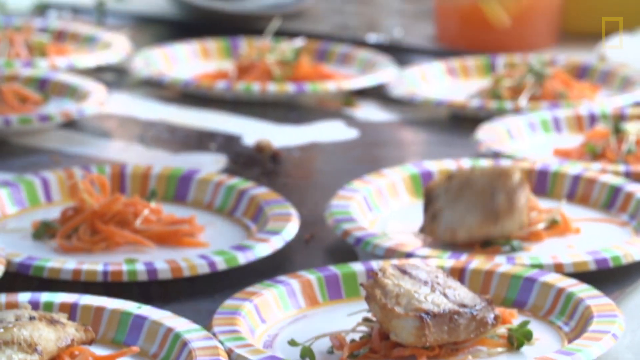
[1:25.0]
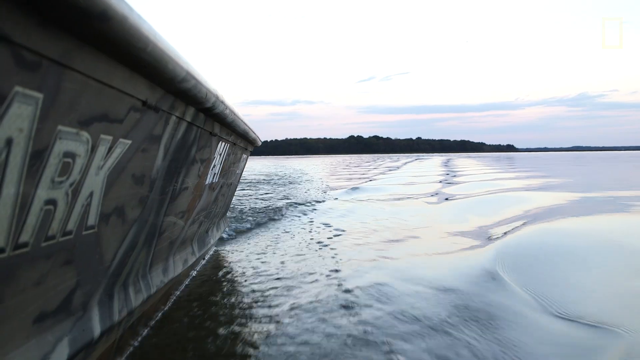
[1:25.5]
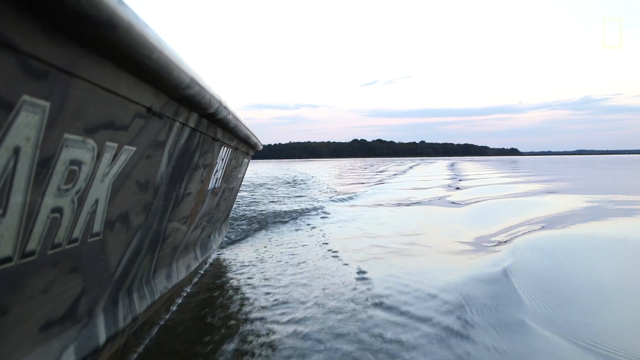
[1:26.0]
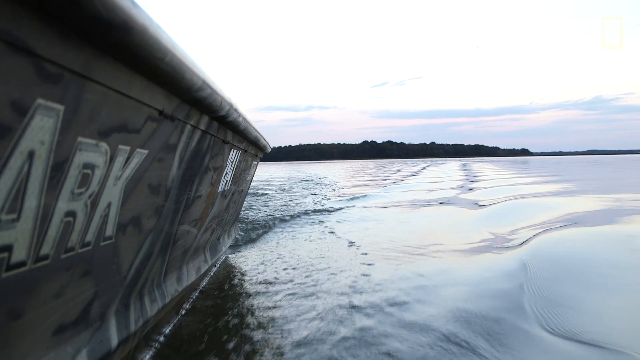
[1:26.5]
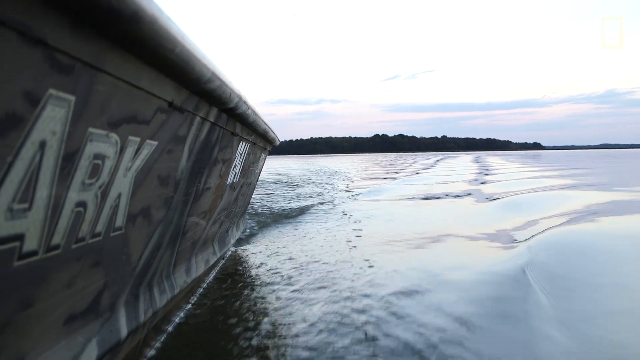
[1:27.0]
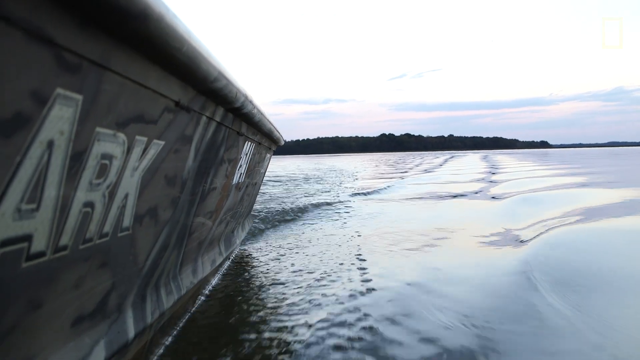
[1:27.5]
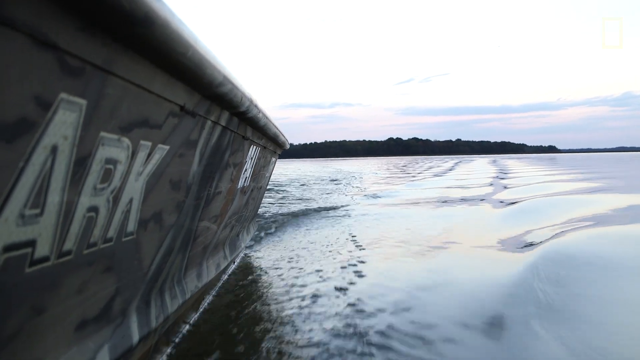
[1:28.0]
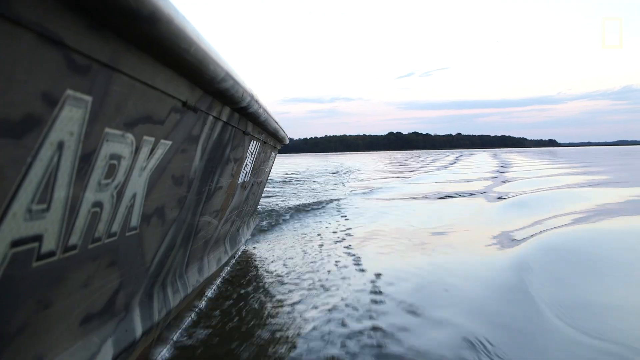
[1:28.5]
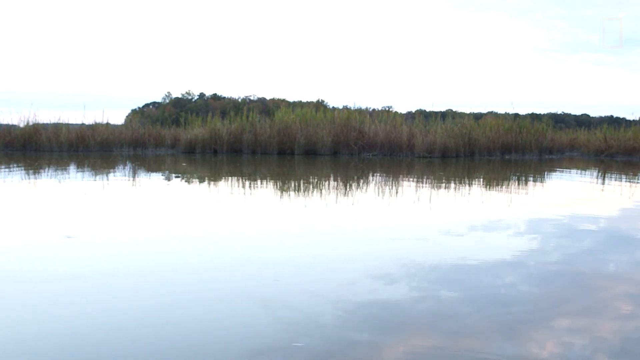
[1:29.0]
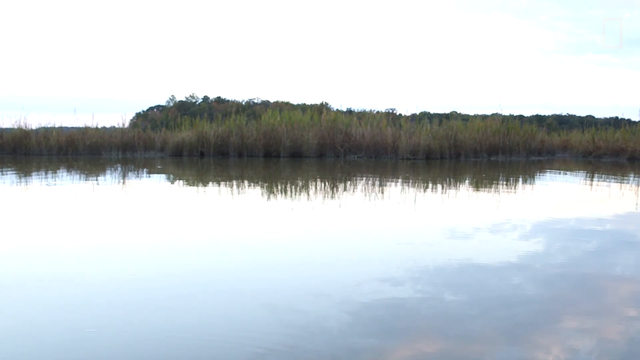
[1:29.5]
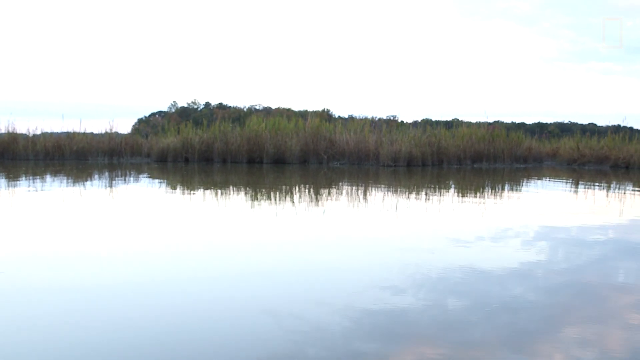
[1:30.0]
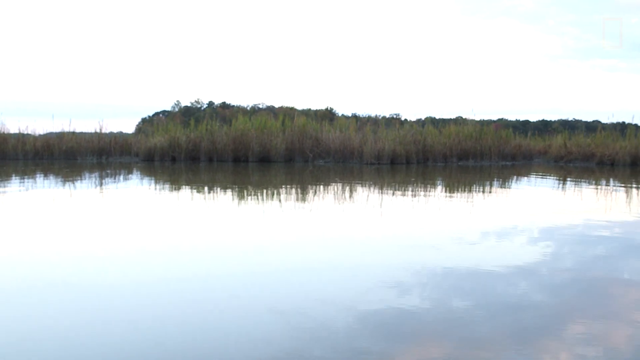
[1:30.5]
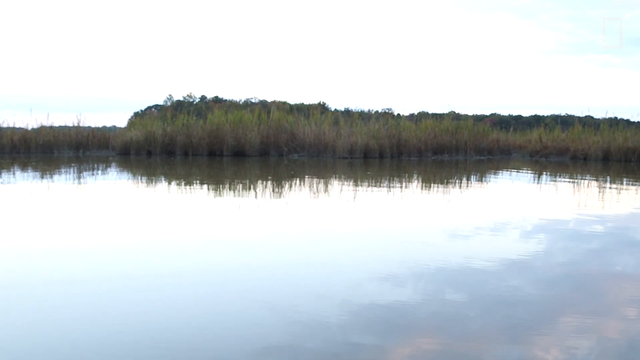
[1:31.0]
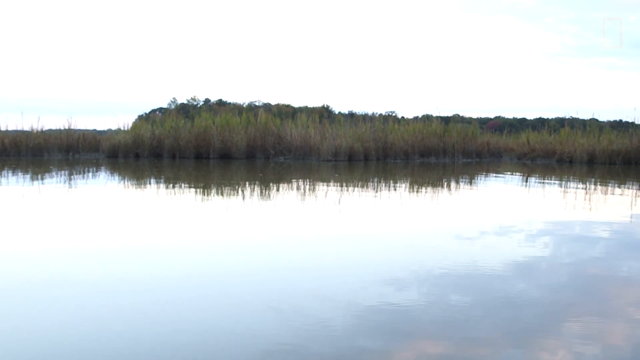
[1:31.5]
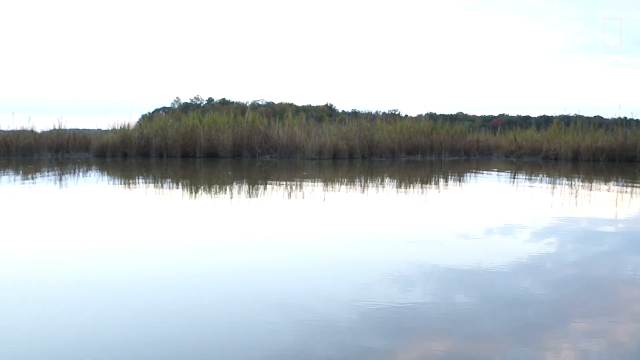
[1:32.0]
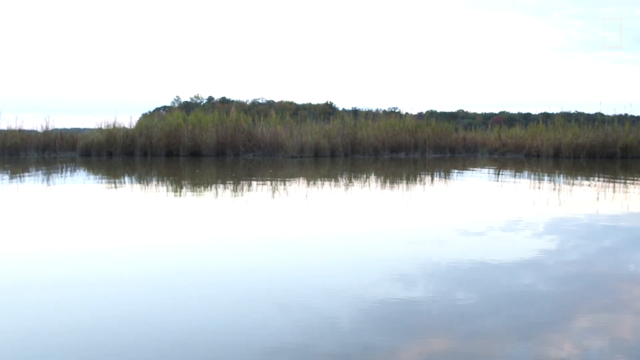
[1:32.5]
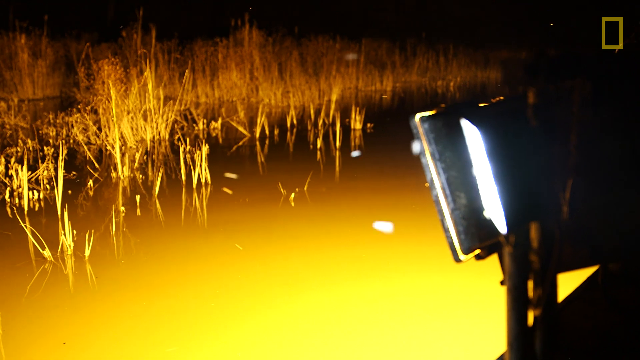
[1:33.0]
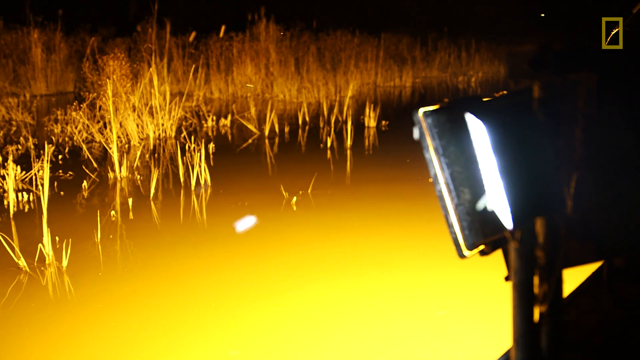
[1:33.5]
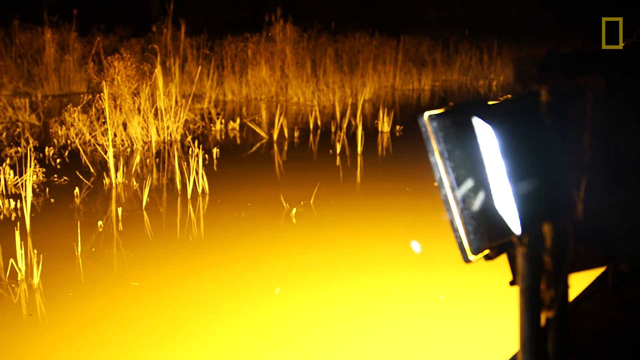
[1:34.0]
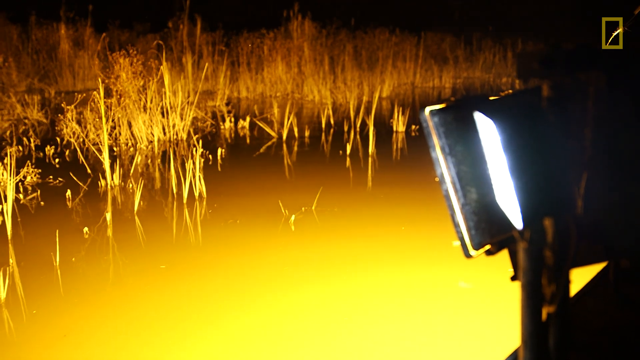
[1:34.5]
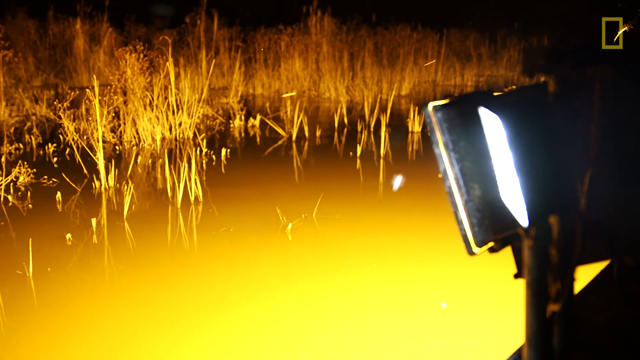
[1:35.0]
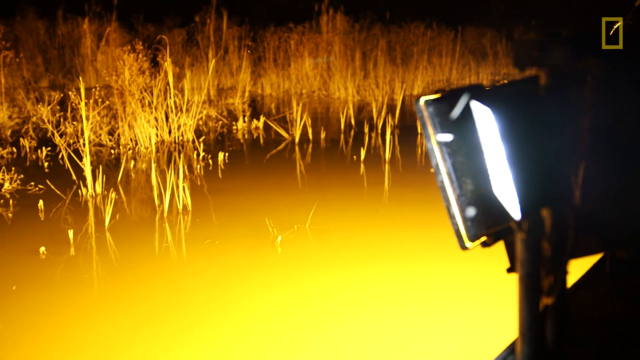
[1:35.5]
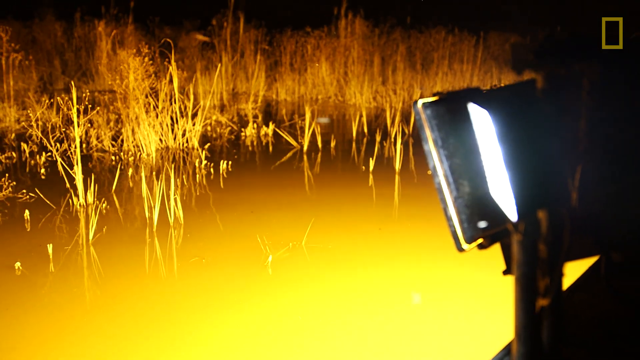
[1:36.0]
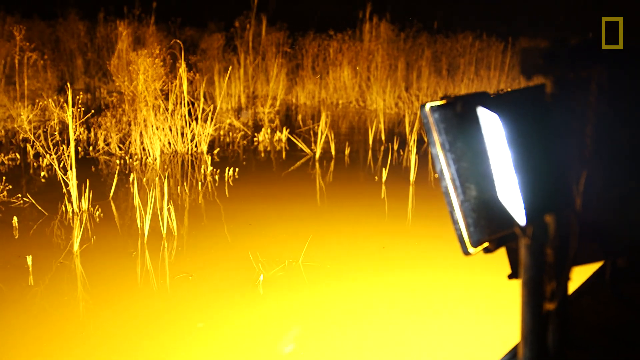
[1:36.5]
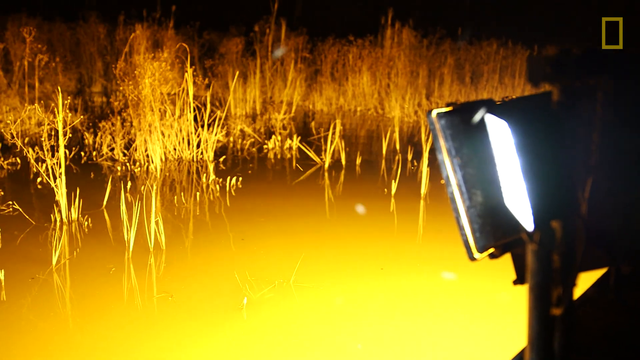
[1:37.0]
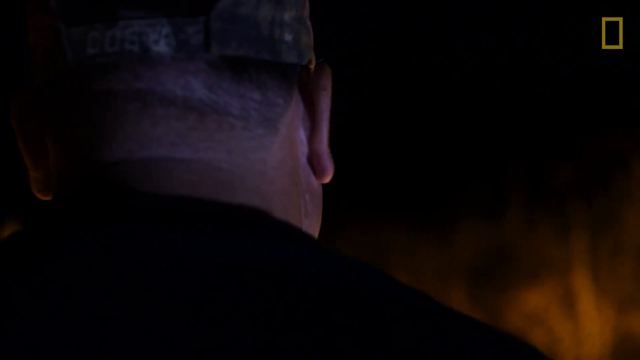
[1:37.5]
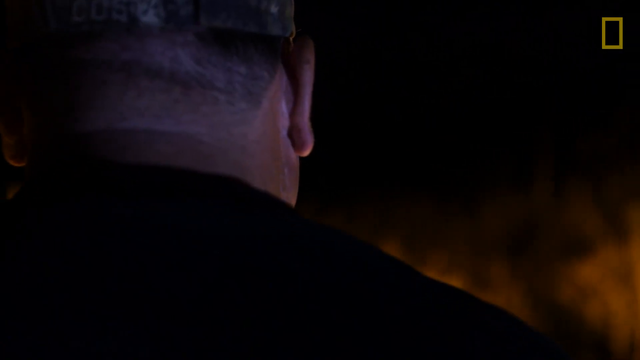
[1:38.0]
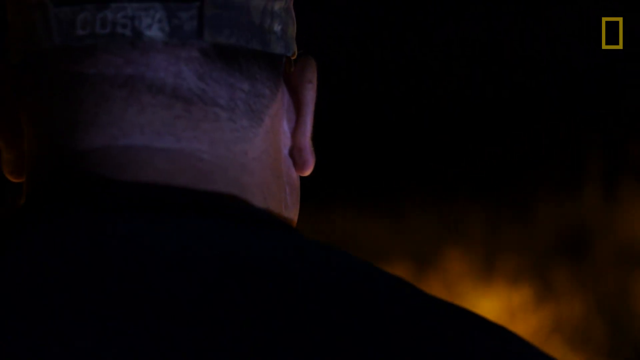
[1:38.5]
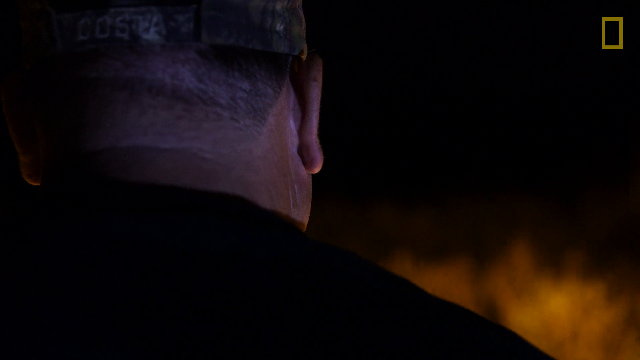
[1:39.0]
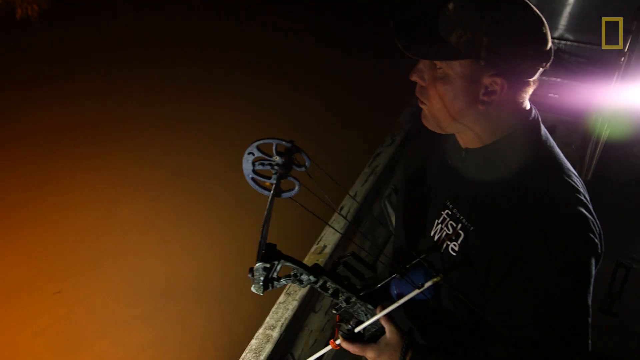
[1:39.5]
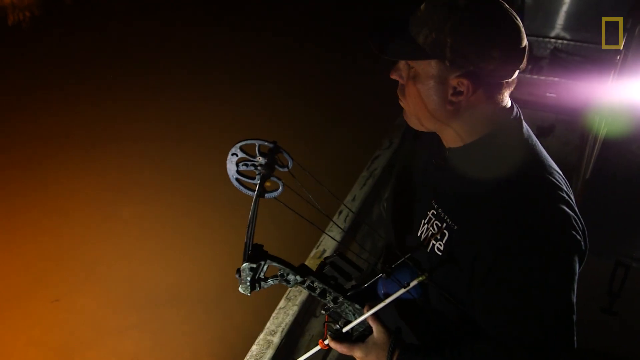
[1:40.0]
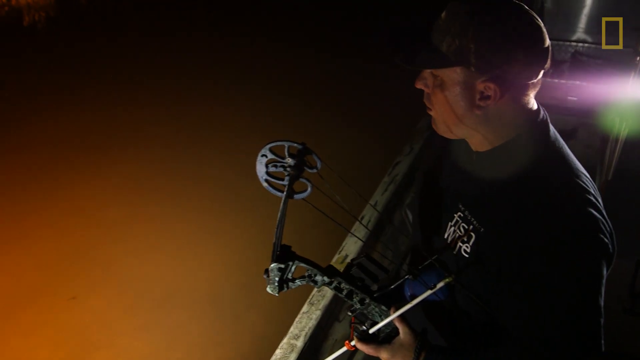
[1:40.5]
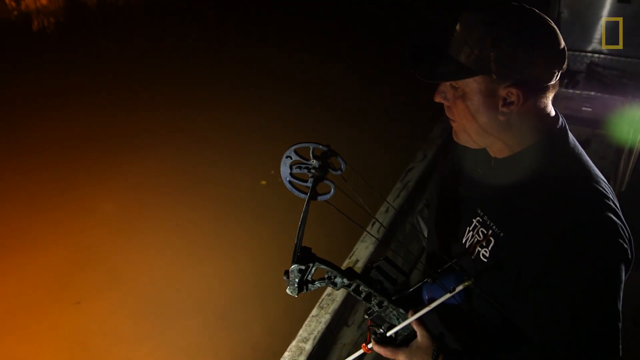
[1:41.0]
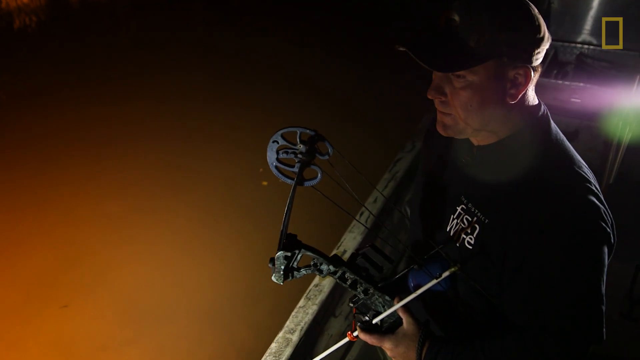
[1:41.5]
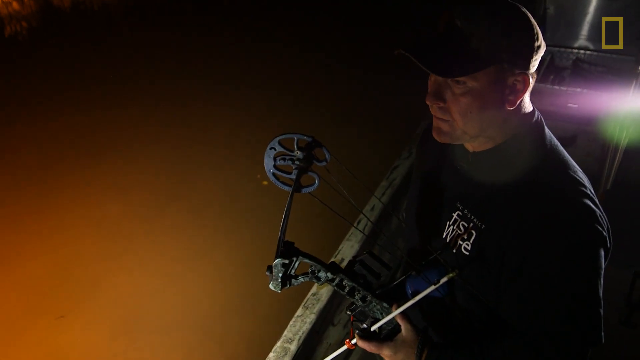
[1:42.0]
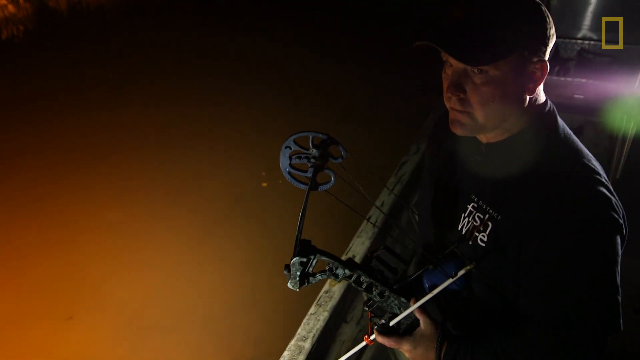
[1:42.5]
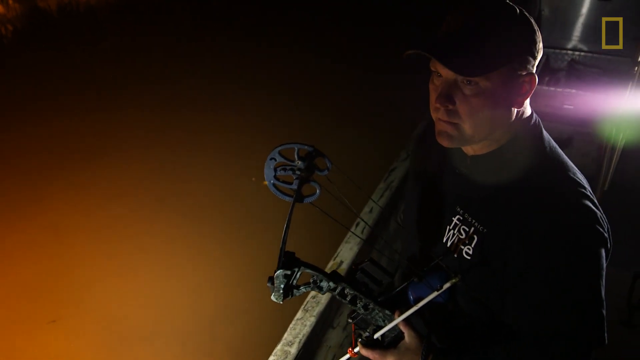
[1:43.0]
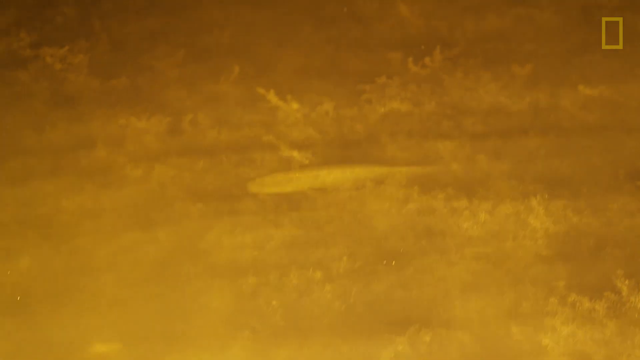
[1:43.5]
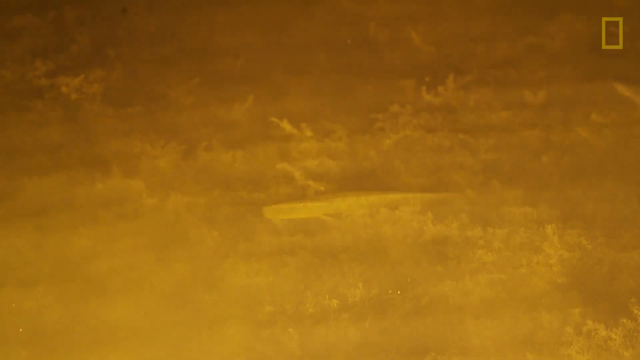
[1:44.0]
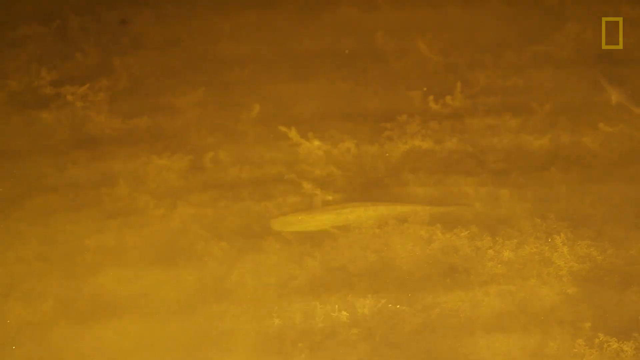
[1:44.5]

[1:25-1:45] The men are out on the lake, and then the scene moves to a festival where people bring in the fish they have caught, apparently in a contest for the biggest fish. They weigh the fish and take fish out of a cooler and put them into a bucket. The fish is then cooked, and people are lined up to eat it; the cooked fish looks very meaty.